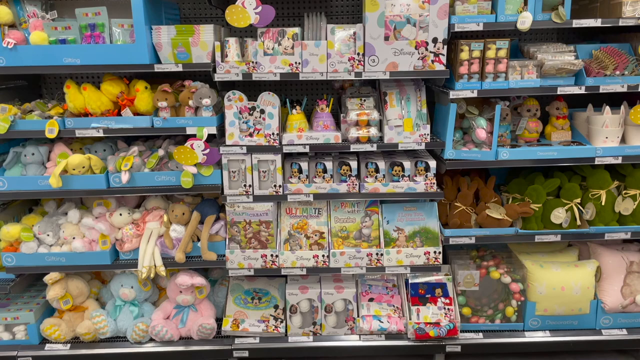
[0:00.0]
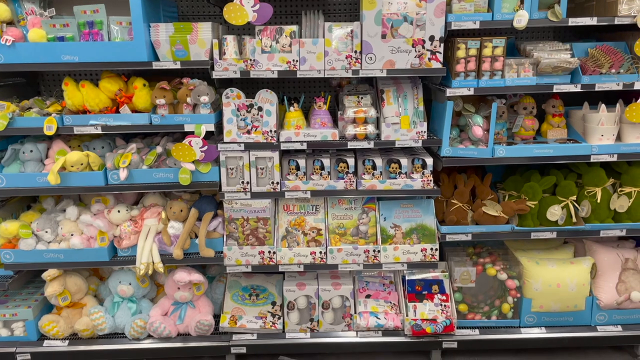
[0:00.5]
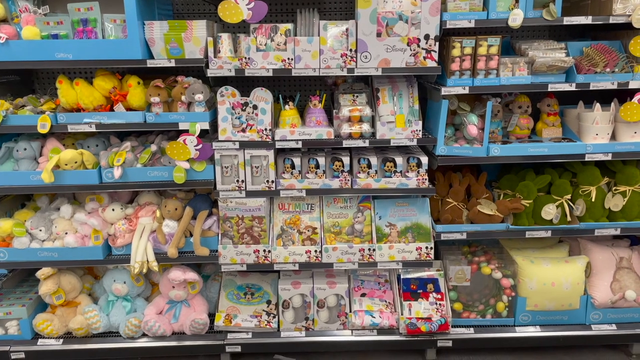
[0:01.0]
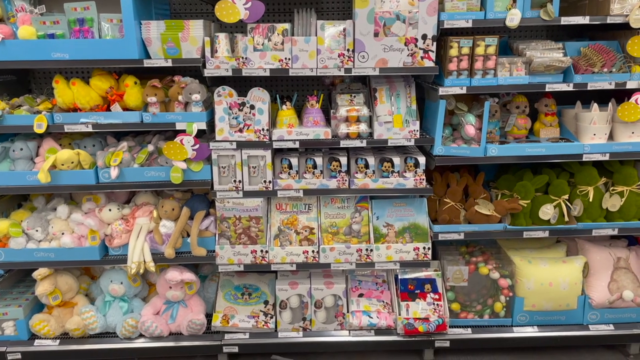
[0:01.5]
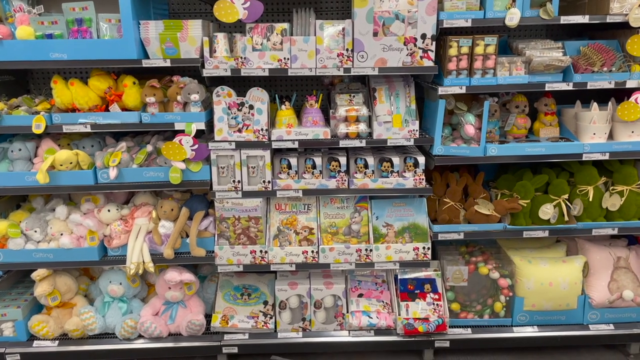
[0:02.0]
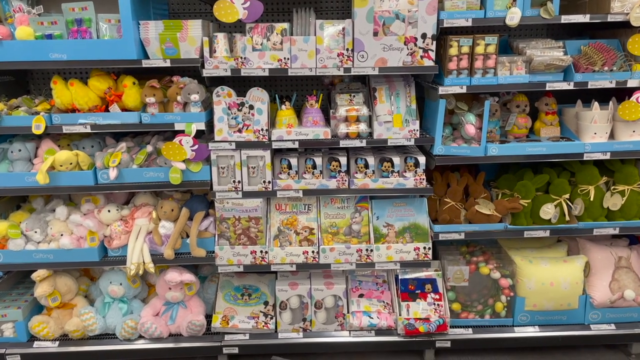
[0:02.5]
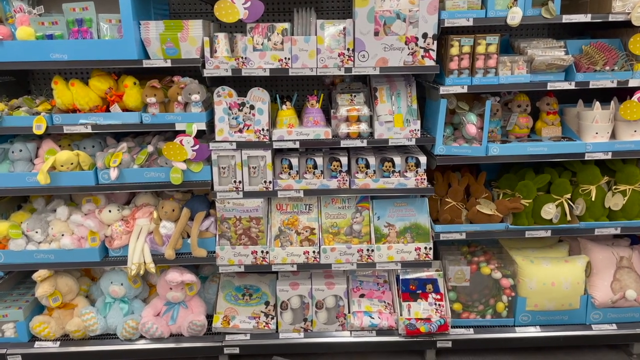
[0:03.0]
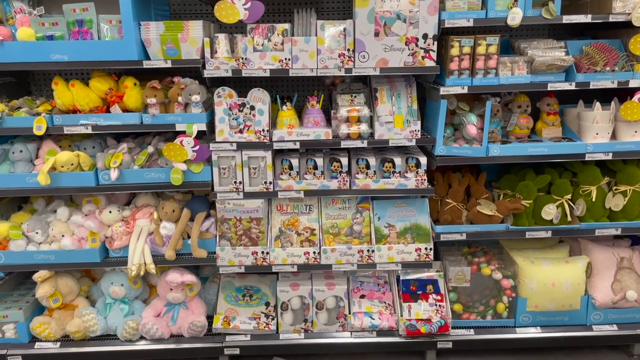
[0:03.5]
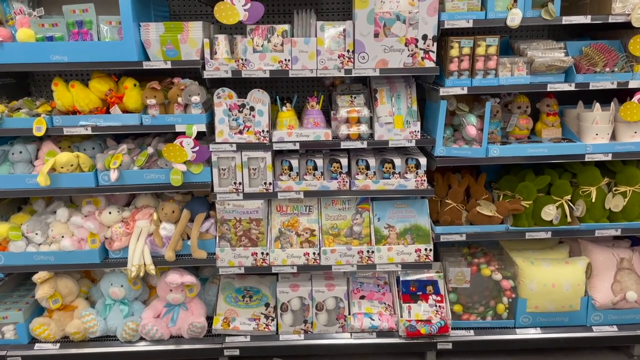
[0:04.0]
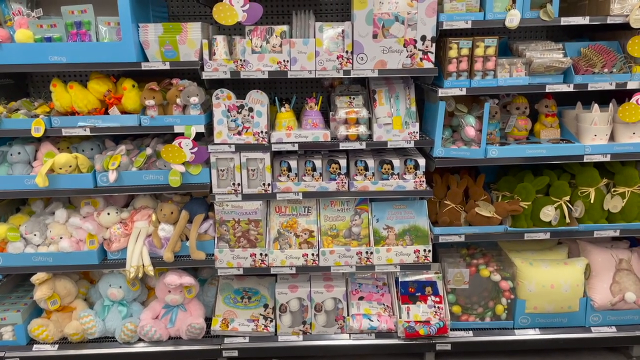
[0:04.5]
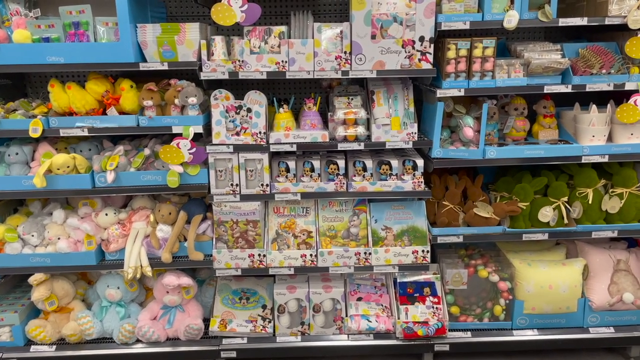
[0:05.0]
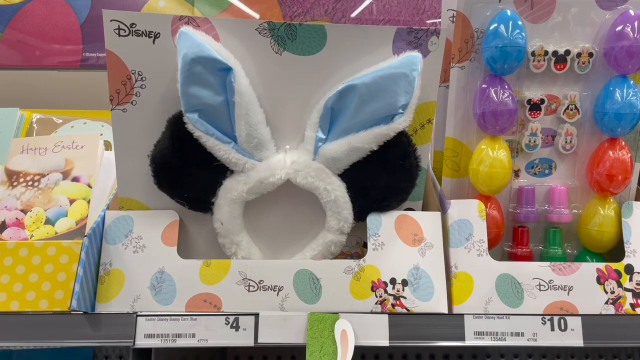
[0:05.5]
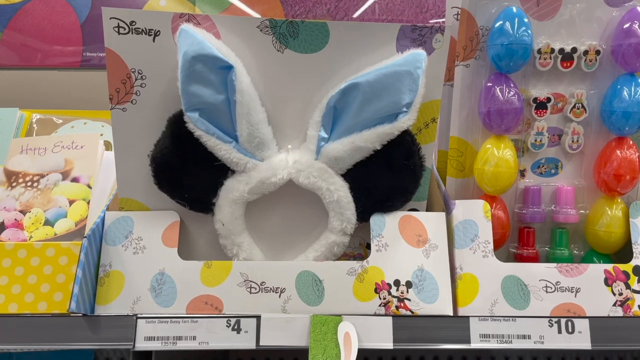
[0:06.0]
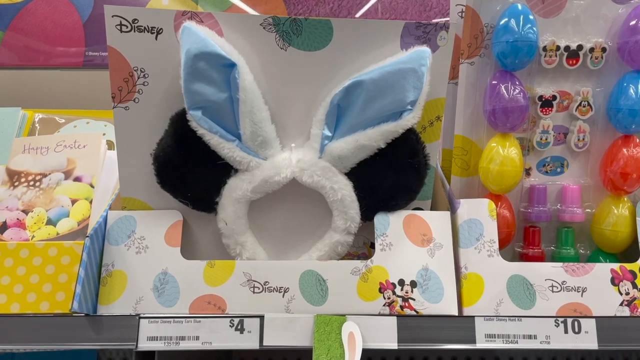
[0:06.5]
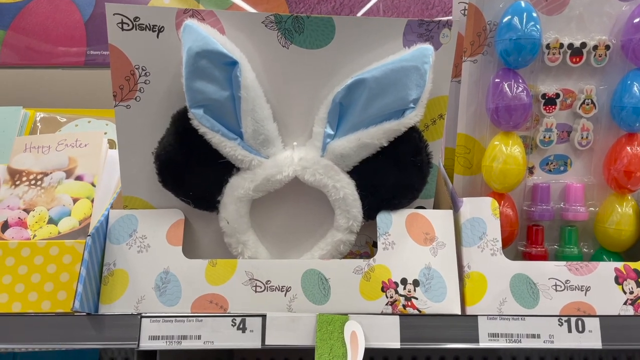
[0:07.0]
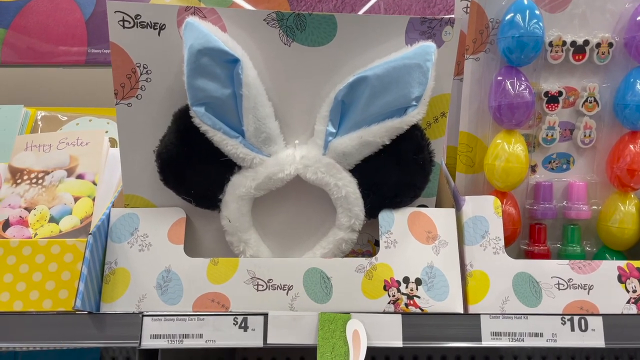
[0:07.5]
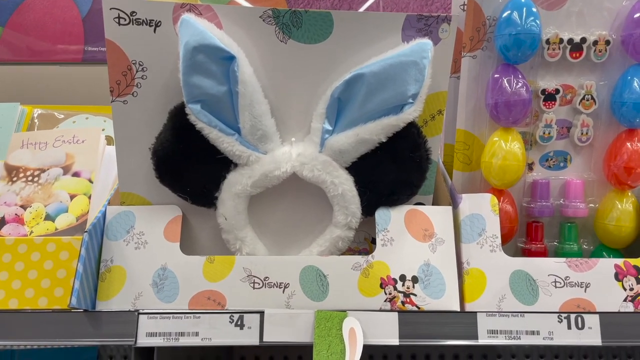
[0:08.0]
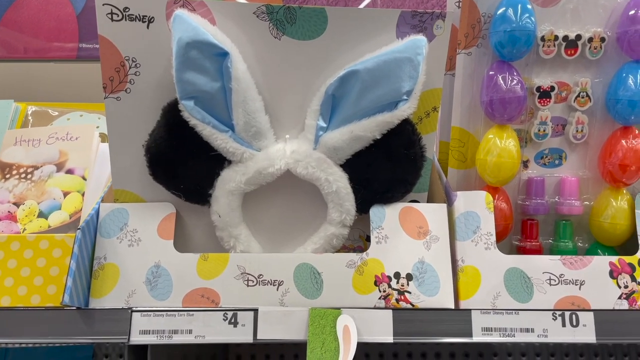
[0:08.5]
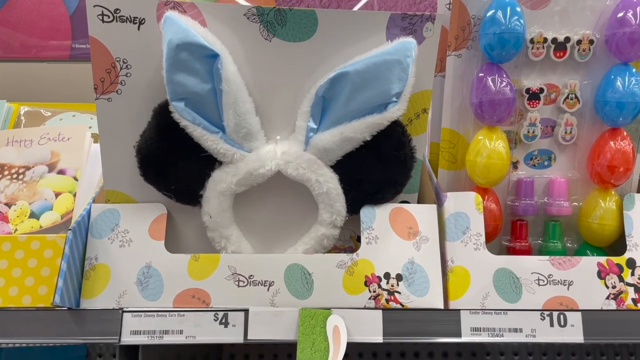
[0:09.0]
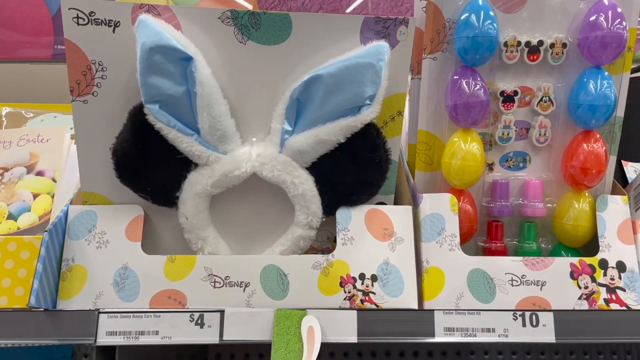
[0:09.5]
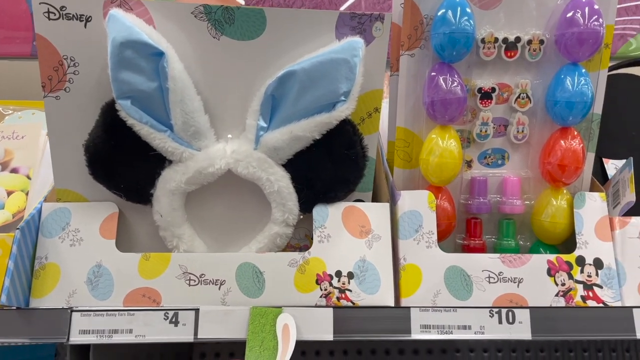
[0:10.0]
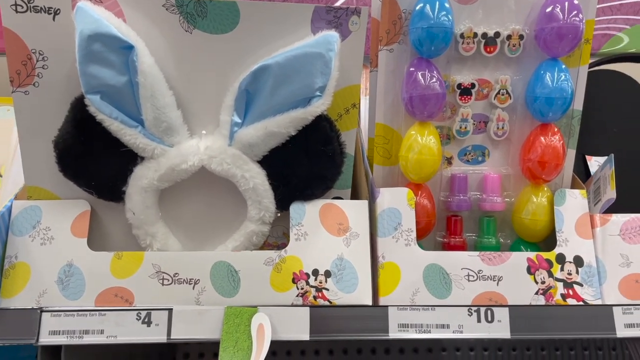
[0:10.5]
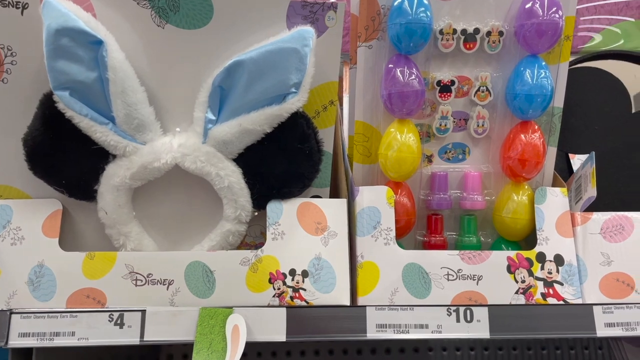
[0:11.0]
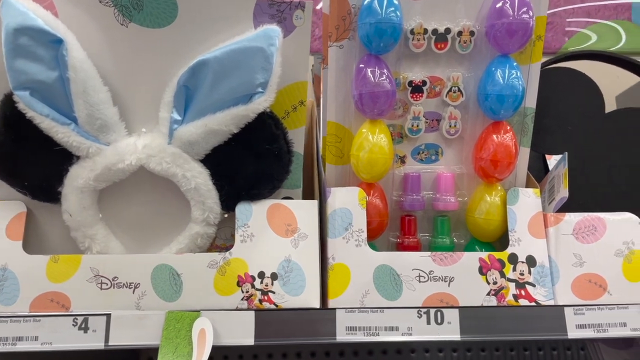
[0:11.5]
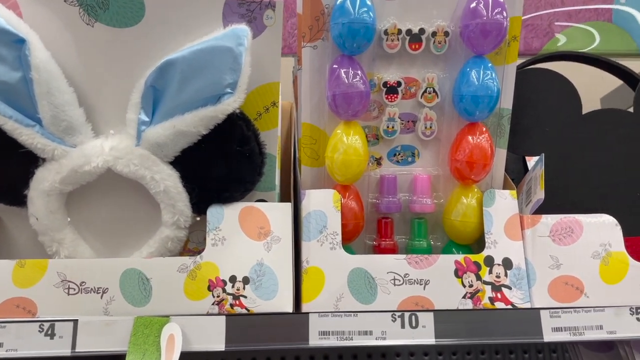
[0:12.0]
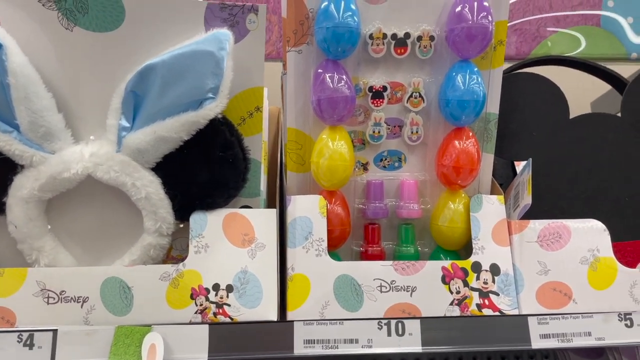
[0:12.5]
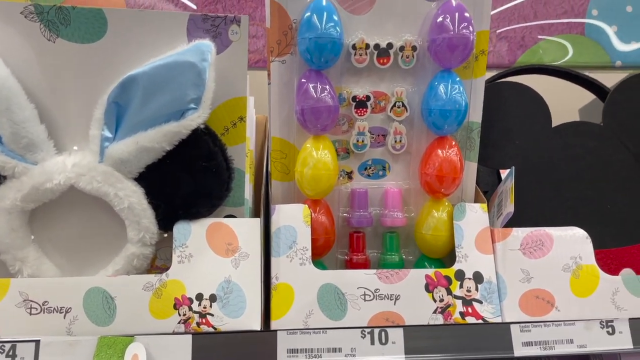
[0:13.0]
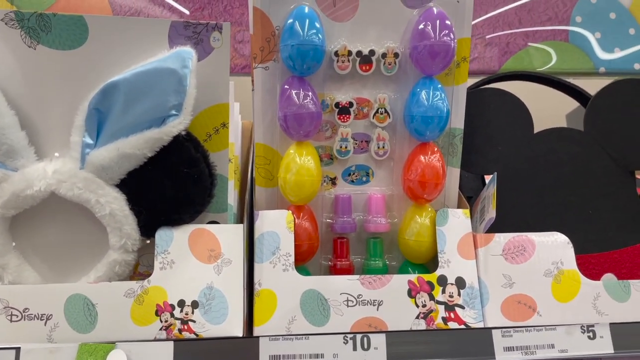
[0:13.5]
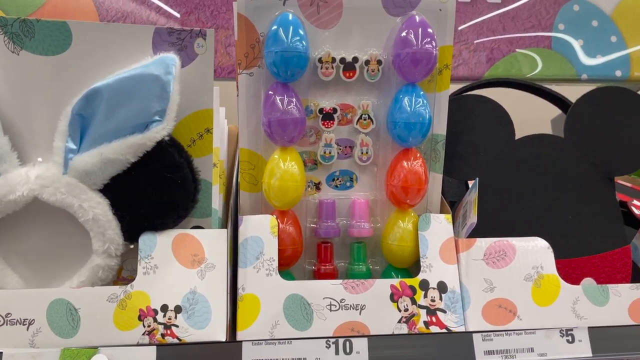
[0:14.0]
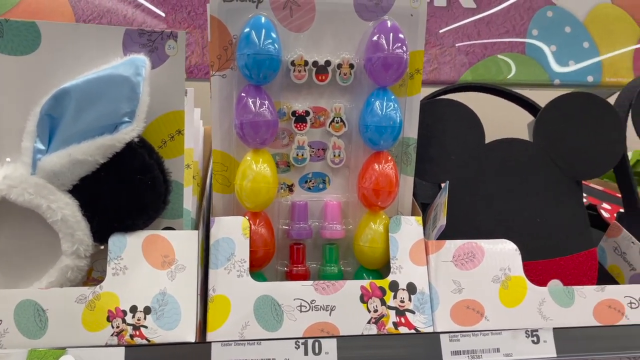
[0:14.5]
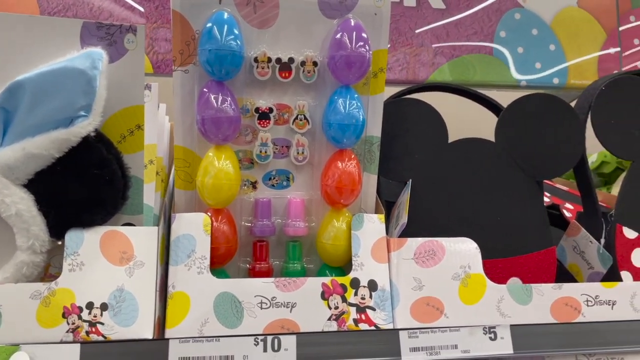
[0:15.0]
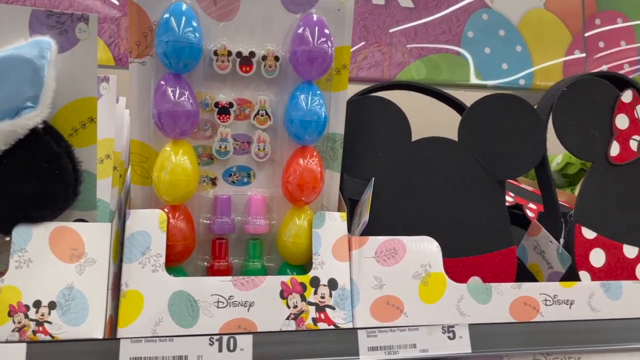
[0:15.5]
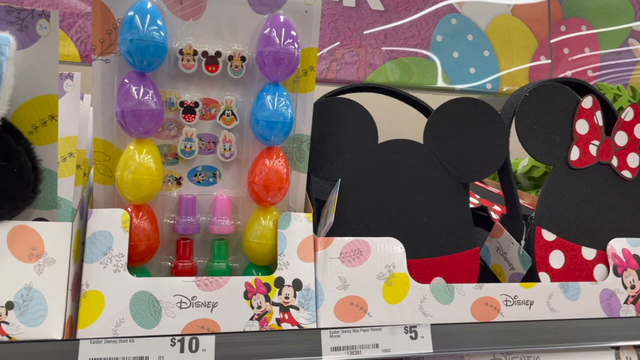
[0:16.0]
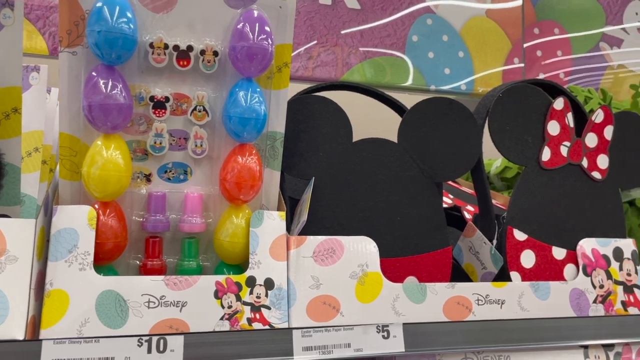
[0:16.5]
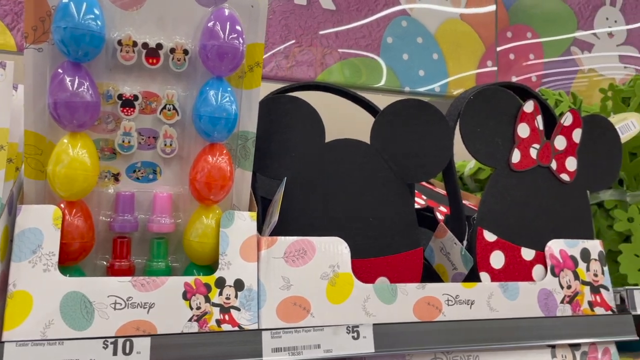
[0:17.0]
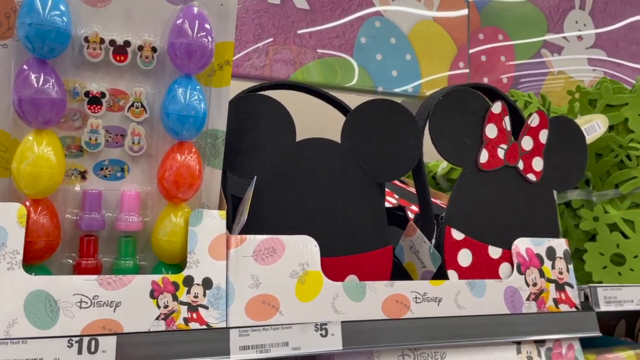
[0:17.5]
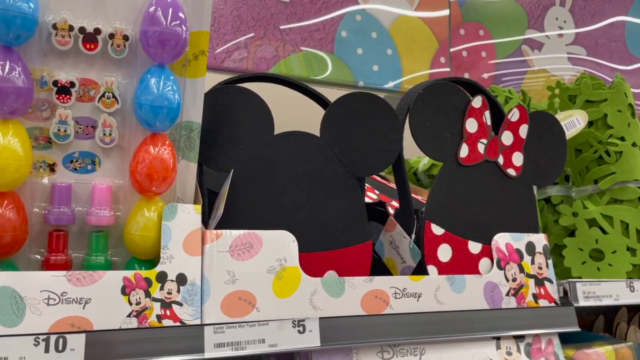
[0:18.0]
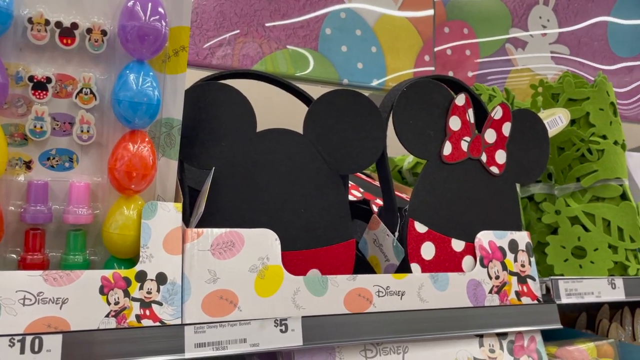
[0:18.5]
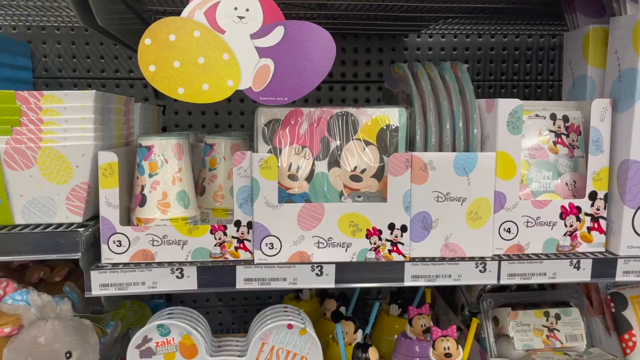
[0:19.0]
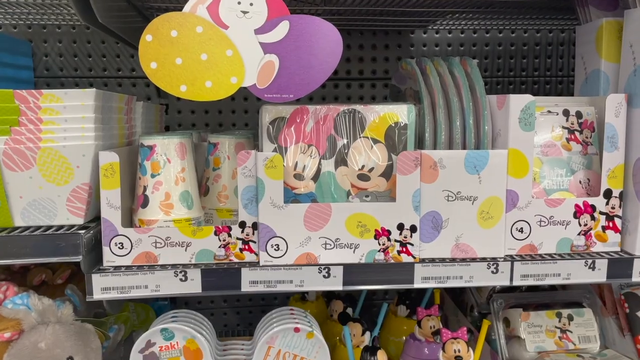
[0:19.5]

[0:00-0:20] The video starts inside an aisle of what looks like a toy store or some sort of grocery store, apparently the toy aisle. Various dolls and Disney-type apparel are on display, including blue, purple, yellow and orange eggs inside a Disney-style package, Mickey Mouse ears inside a Disney package, what look like stickers with Disney characters, and more Mickey Mouse ears. The camera pans right across these products. No people are shown. The setting stays the same while the camera pans, zooms in and pans around the aisle. The toys seem to be mostly Disney-themed, though some non-Disney toys are also visible in the frame.